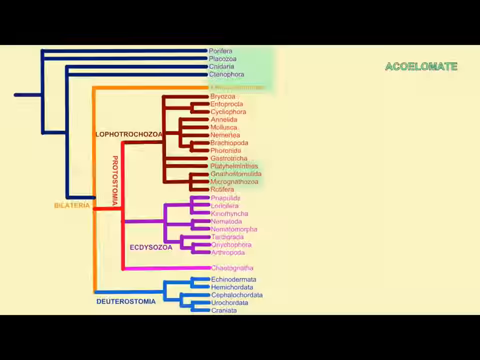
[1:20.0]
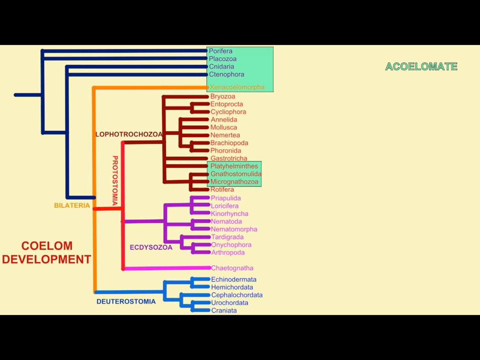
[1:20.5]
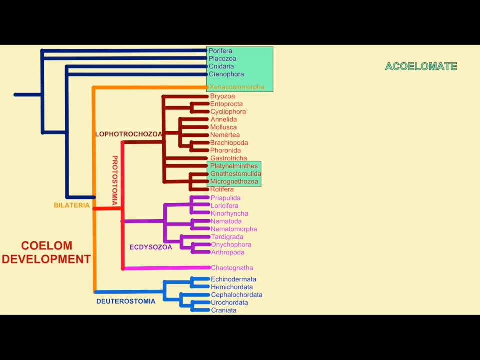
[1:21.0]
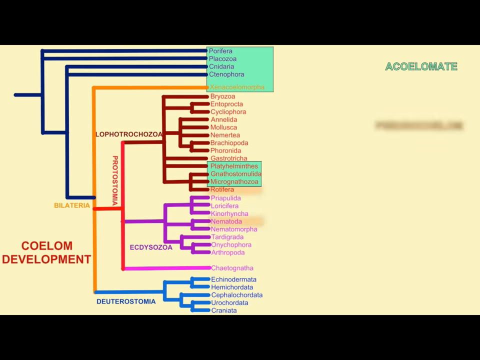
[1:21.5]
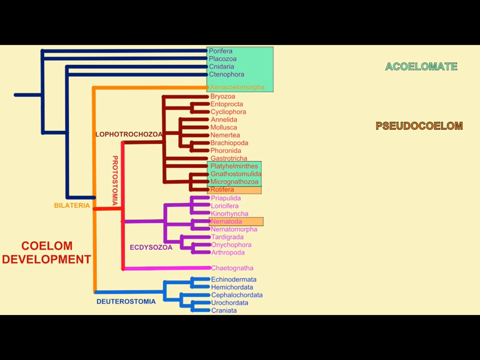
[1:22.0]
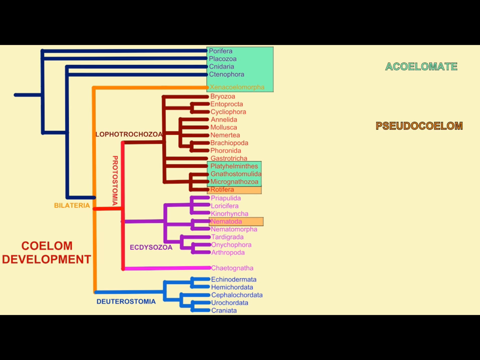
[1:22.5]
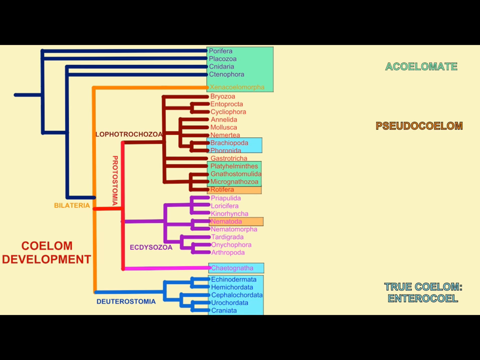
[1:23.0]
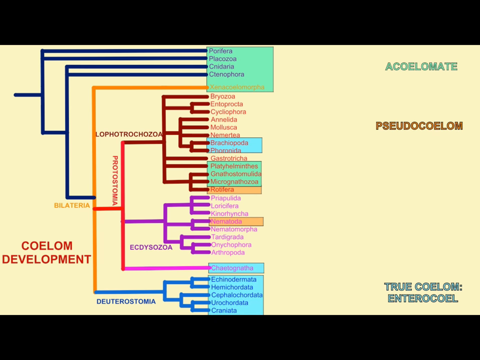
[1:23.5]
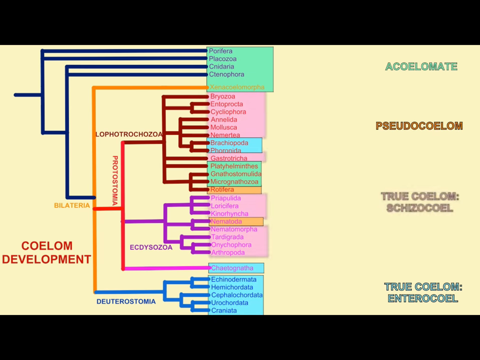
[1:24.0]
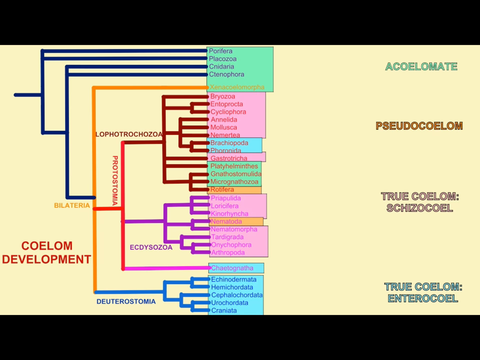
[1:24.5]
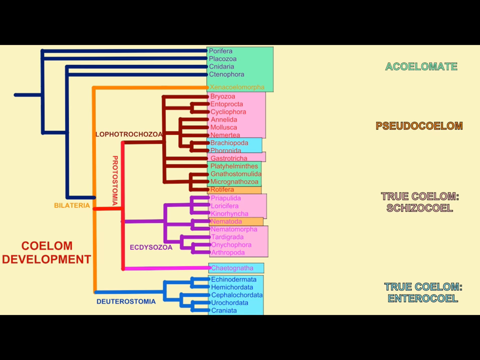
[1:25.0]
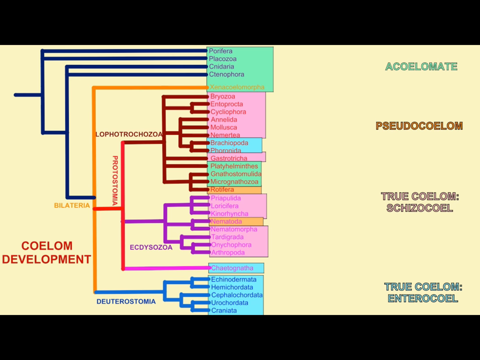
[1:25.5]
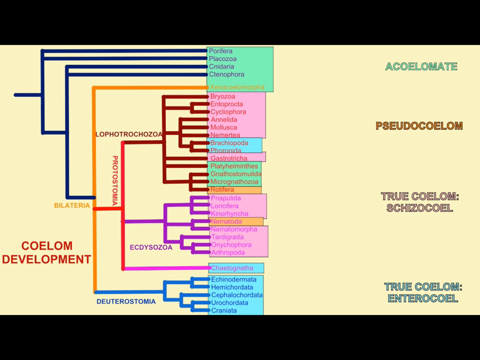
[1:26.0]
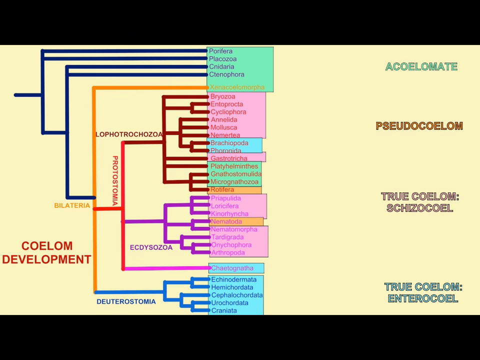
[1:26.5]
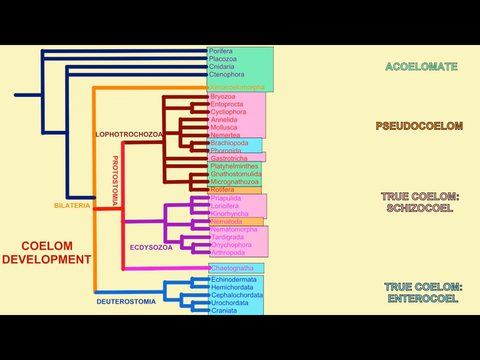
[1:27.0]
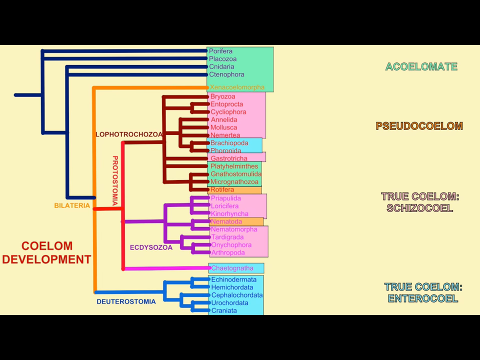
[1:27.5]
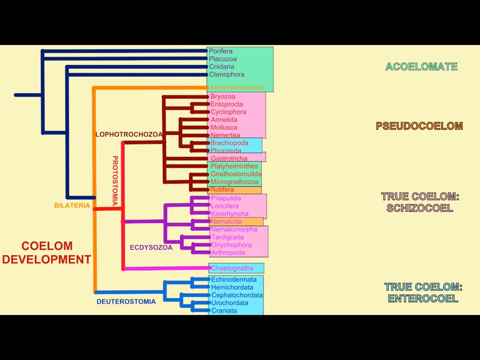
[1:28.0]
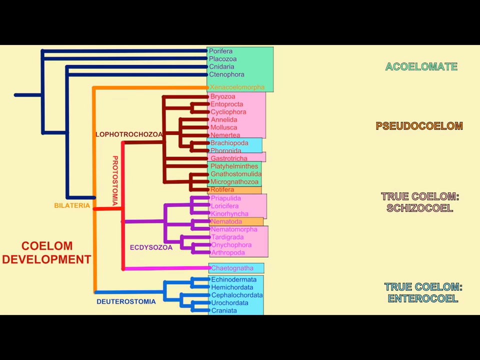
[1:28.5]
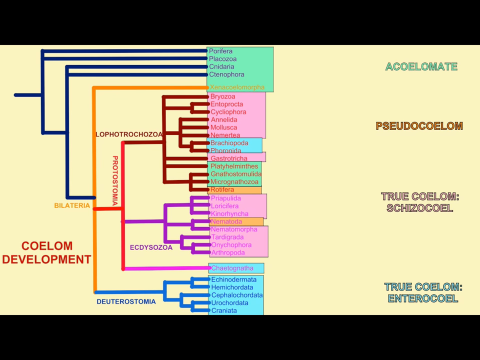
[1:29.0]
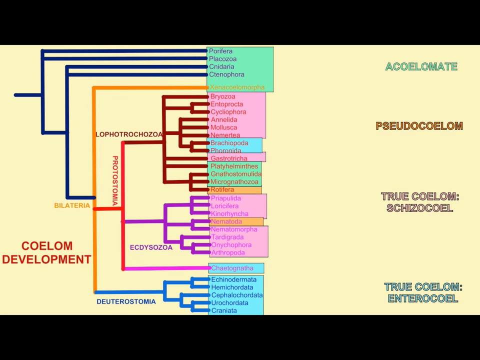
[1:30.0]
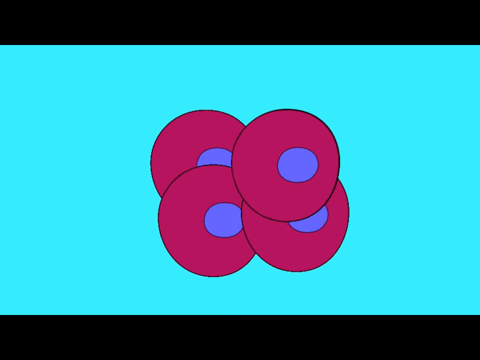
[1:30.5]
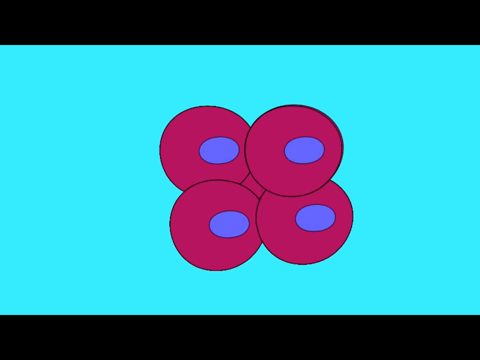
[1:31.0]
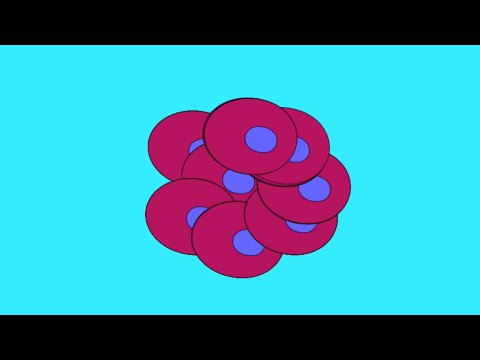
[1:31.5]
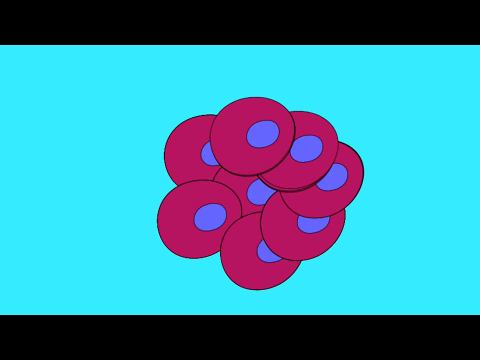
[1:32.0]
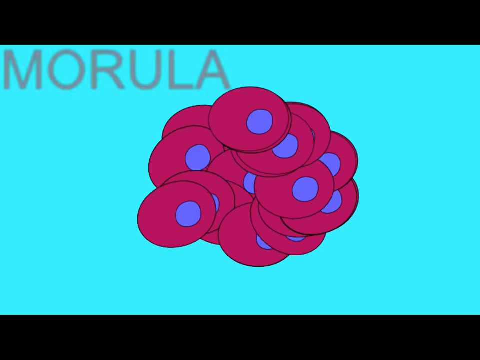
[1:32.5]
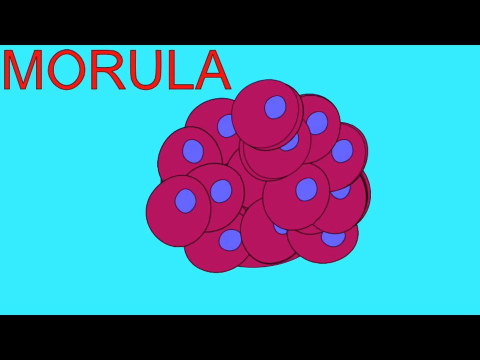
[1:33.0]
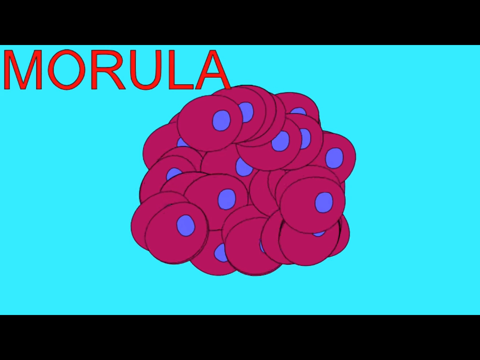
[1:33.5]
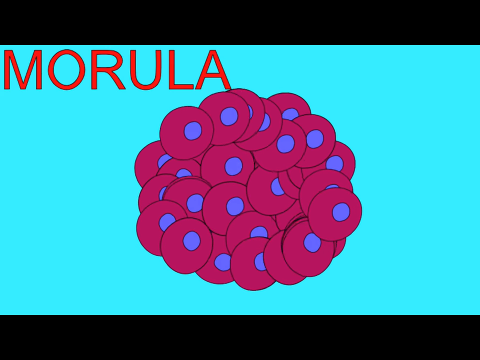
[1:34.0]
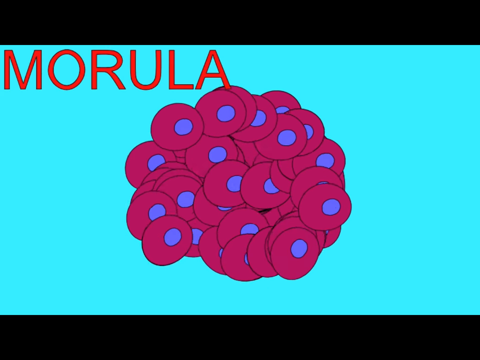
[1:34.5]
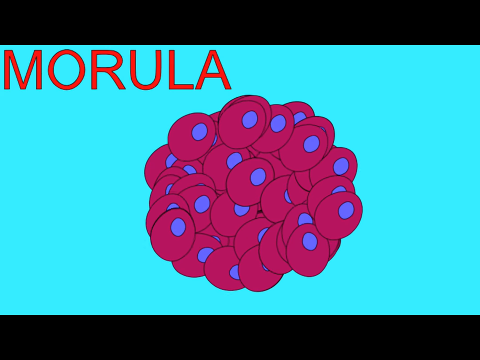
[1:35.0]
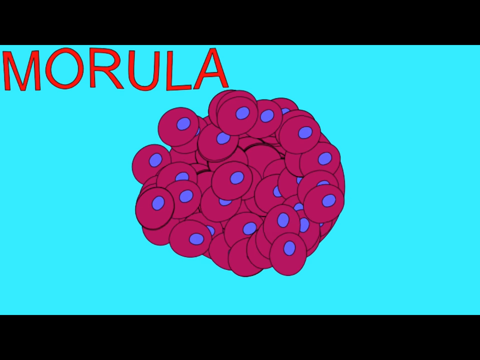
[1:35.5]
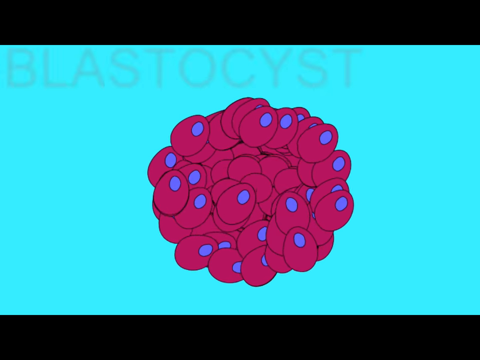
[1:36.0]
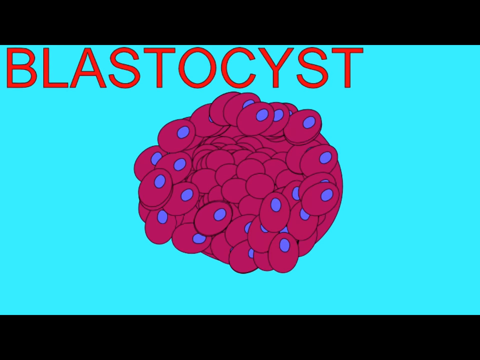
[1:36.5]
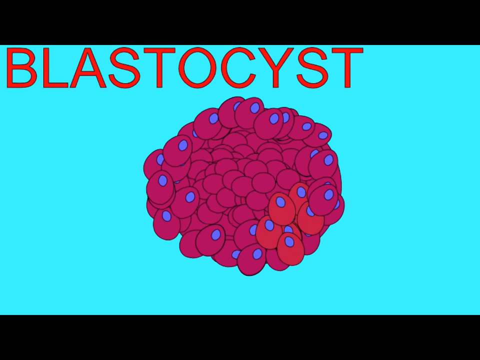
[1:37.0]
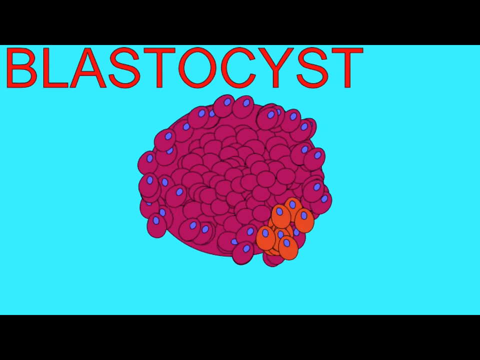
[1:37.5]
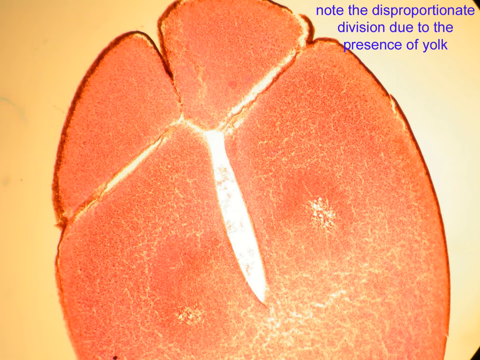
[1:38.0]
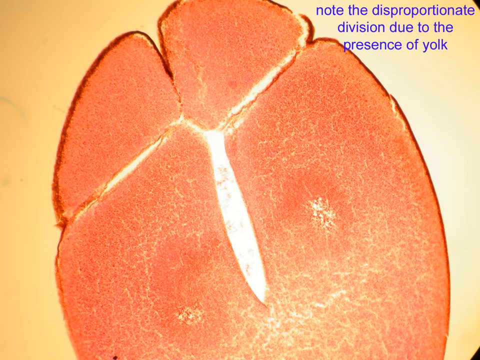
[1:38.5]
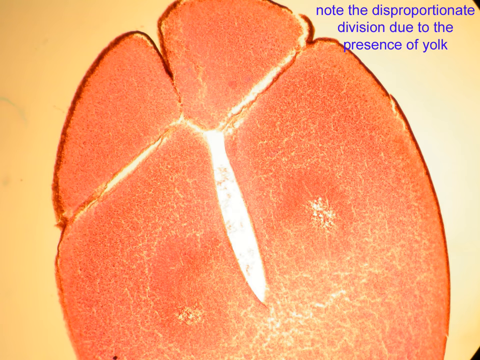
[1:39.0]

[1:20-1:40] A blue screen appears with a heading at the top that begins "formation of" and ends "and protostomes". On the screen there is a red circle outlined in orange. A blue line comes down and curves to the left, curves around at the bottom, and goes back up toward the top, and this is surrounded by a yellow line. In the center it says "lumen of digestive tract". It switches to a screen with what looks like a playoffs bracket or some sort of championship bracket on the left and writing on the right. Then comes a blue screen with an illustration of pink cells with purple nuclei in the middle. The cells divide and grow, and at the top left it says "morula" in red letters. The cells continue to grow and divide, and another word appears at the top. Then it switches to what looks like a microscope image of something.